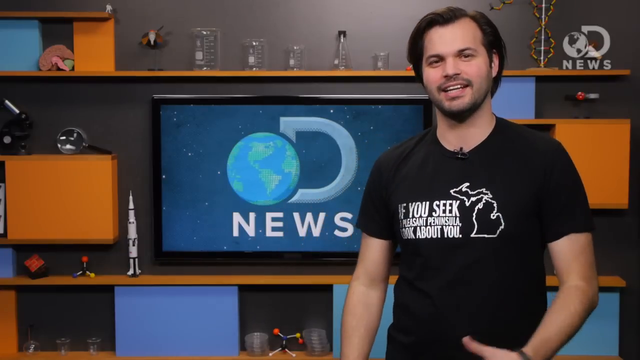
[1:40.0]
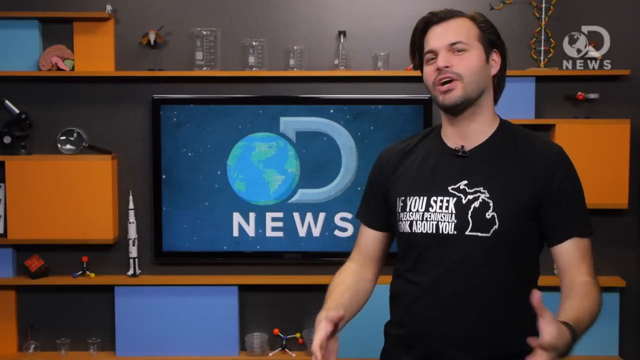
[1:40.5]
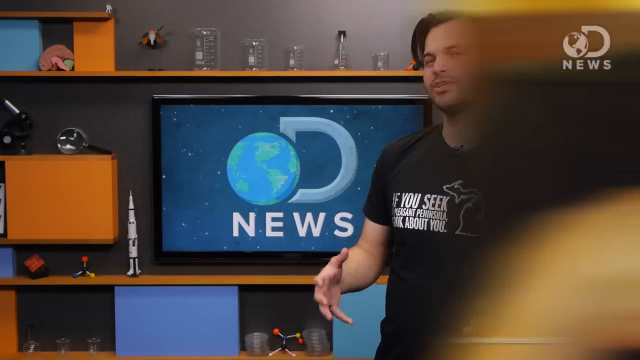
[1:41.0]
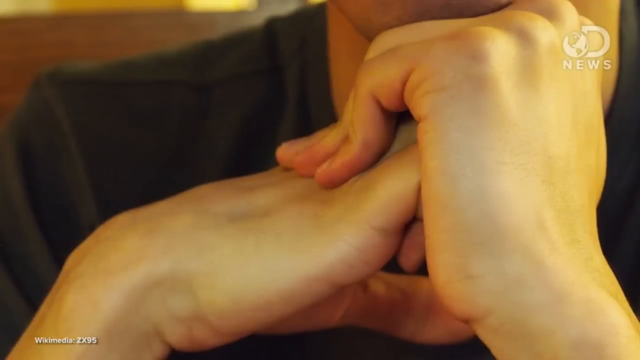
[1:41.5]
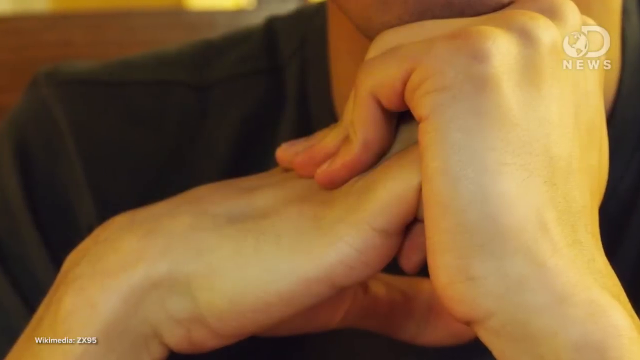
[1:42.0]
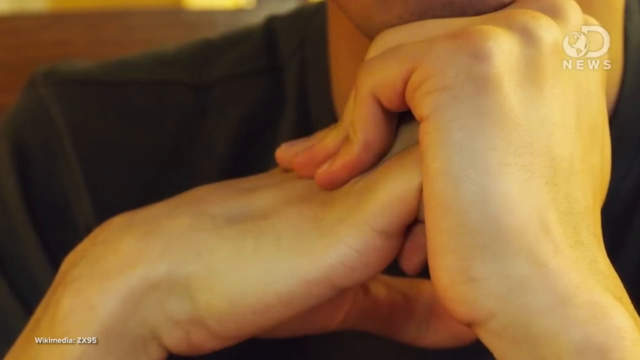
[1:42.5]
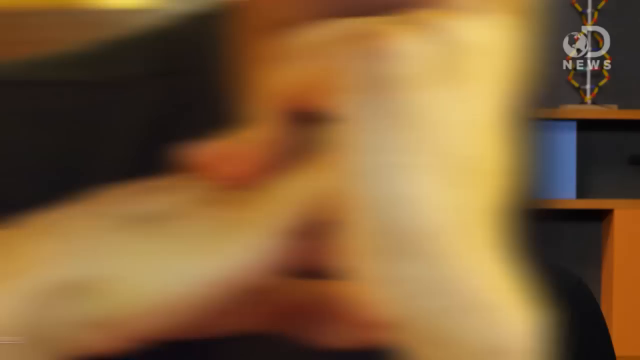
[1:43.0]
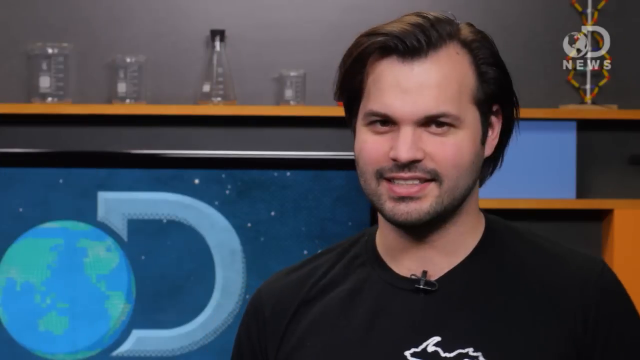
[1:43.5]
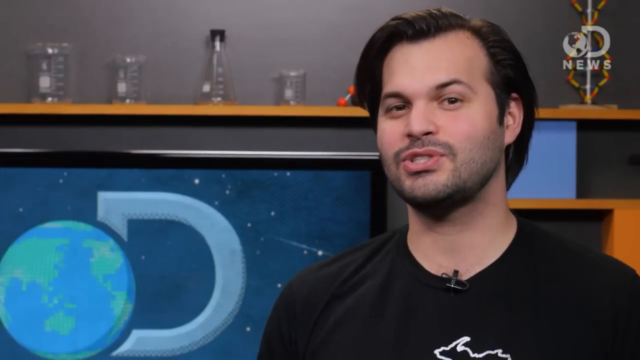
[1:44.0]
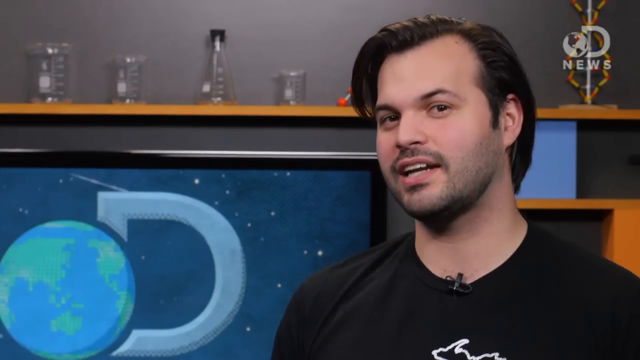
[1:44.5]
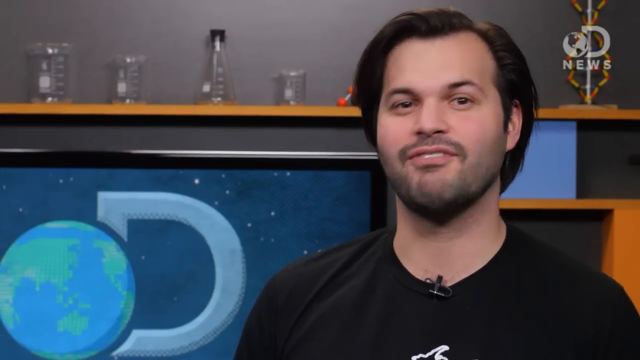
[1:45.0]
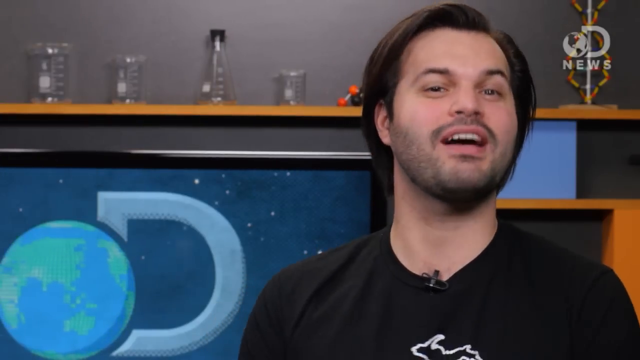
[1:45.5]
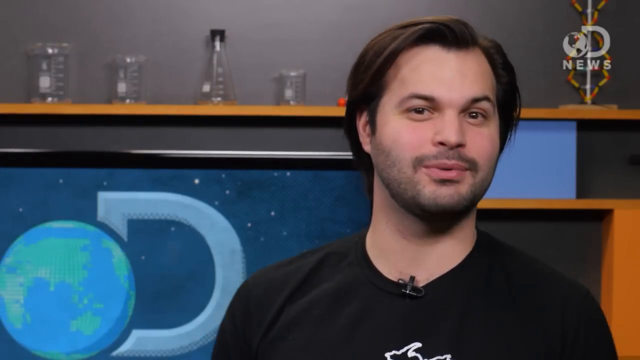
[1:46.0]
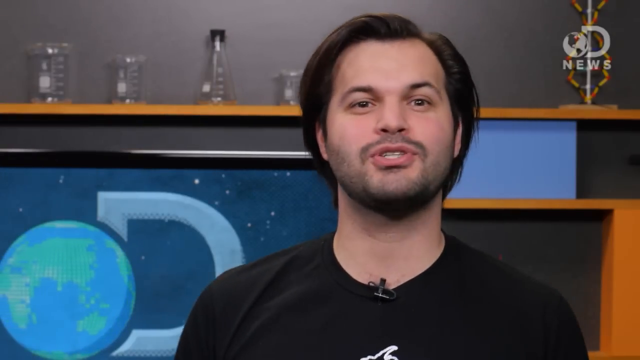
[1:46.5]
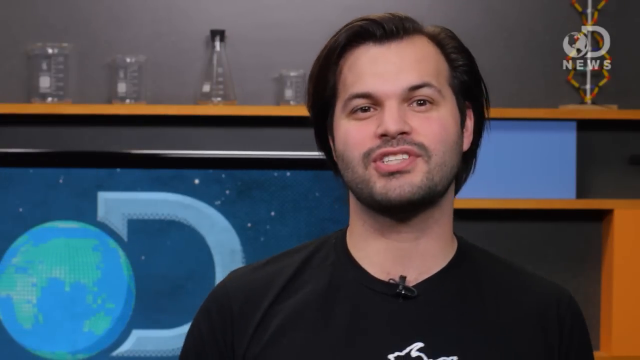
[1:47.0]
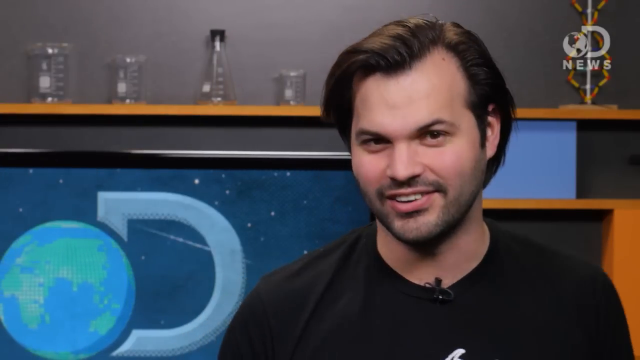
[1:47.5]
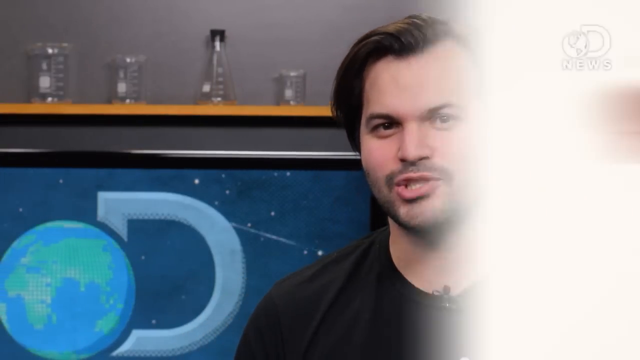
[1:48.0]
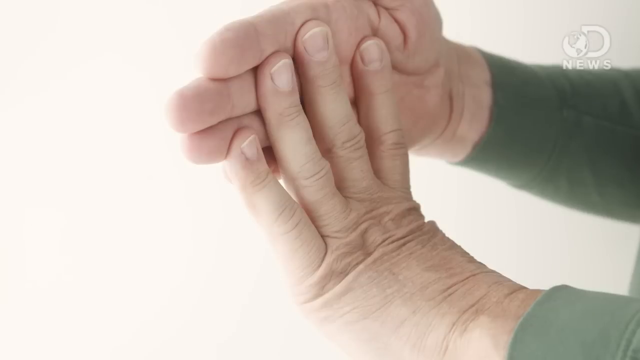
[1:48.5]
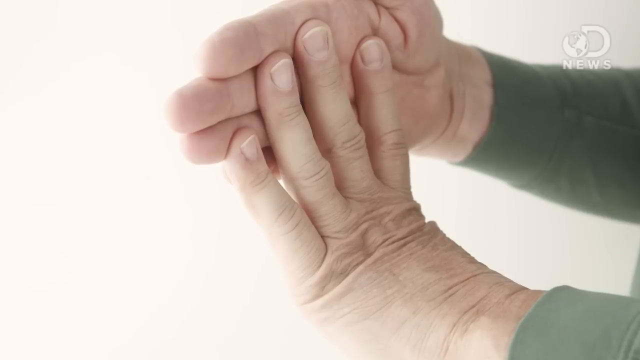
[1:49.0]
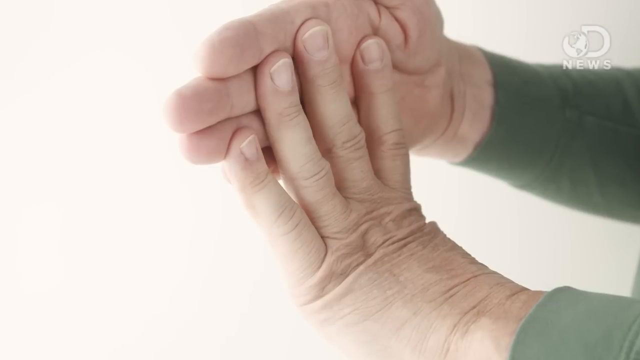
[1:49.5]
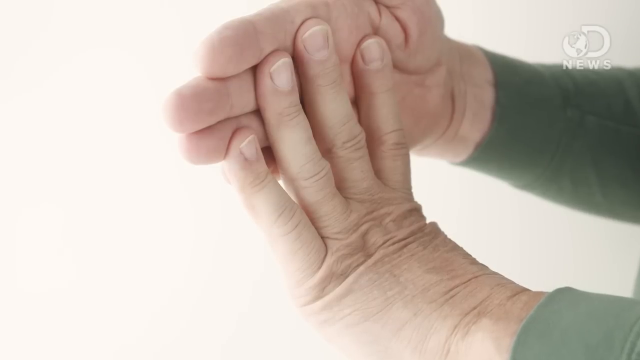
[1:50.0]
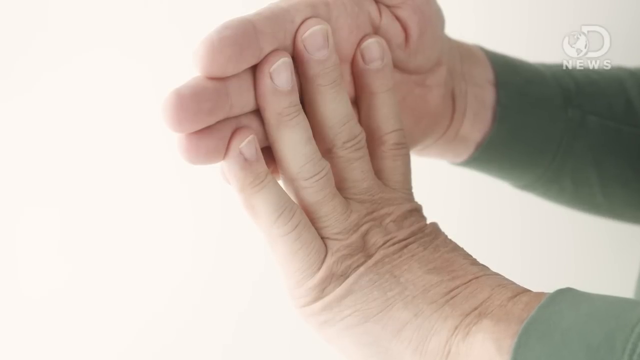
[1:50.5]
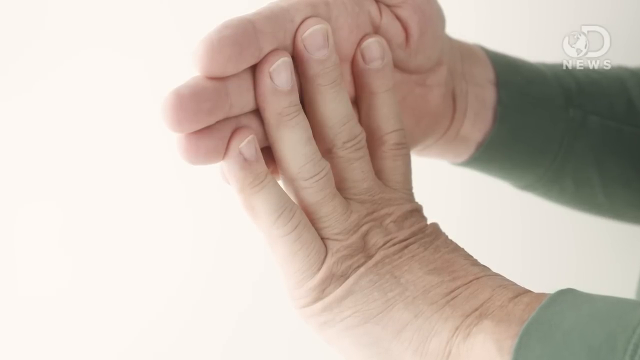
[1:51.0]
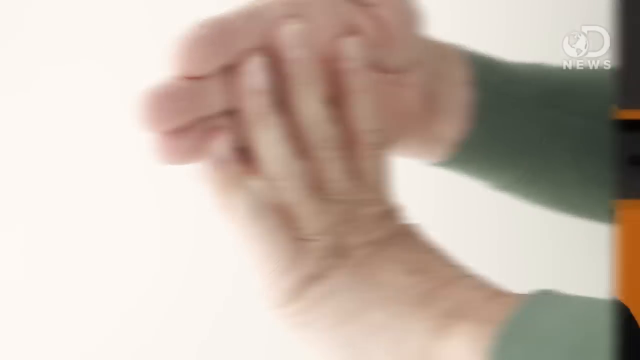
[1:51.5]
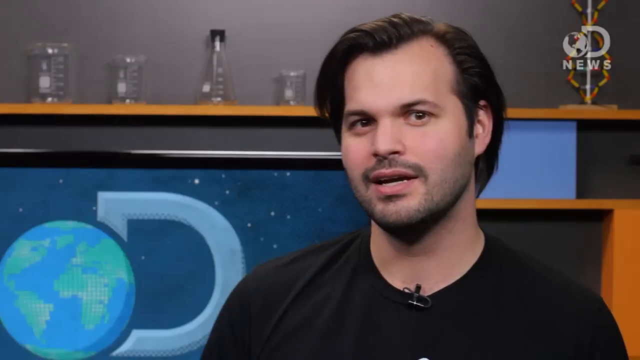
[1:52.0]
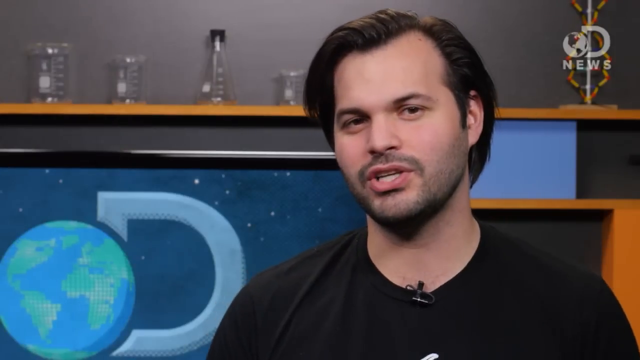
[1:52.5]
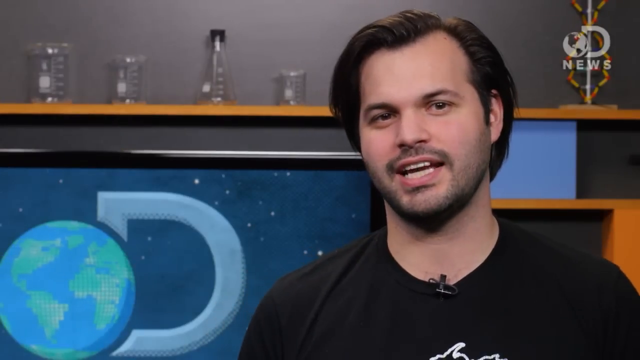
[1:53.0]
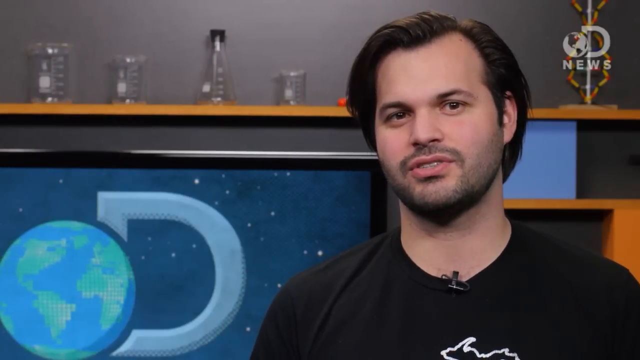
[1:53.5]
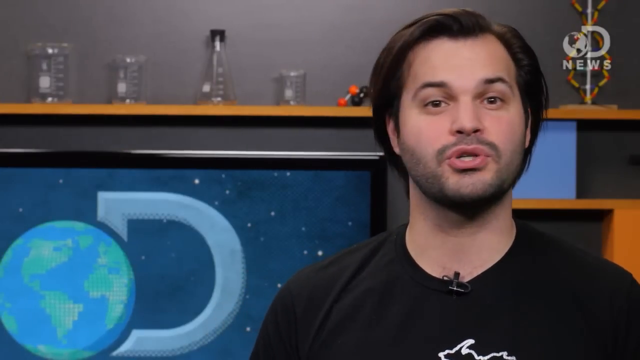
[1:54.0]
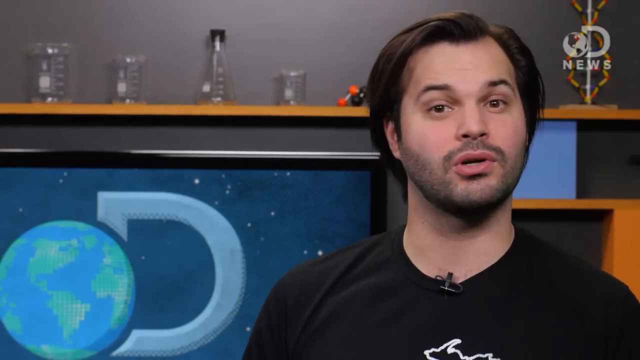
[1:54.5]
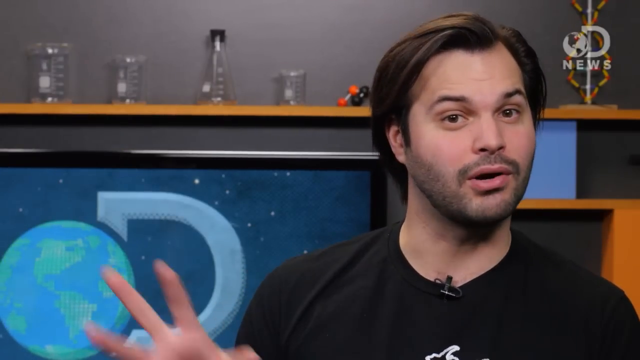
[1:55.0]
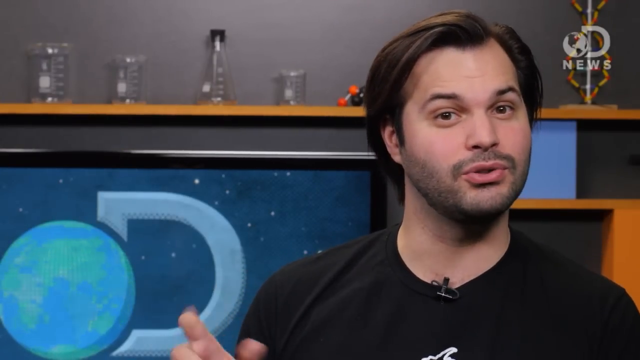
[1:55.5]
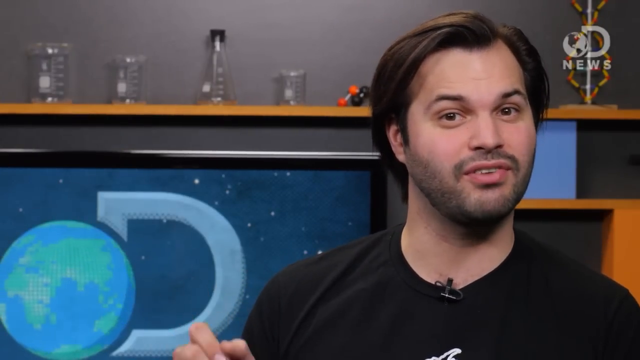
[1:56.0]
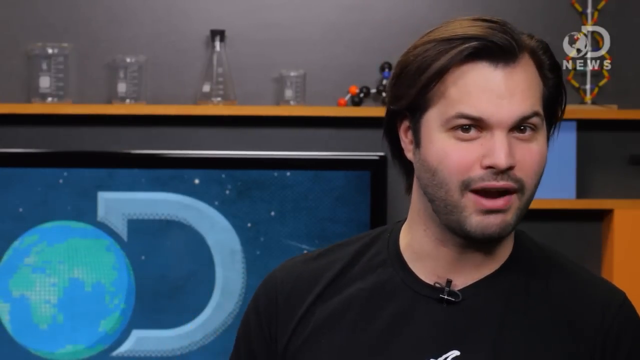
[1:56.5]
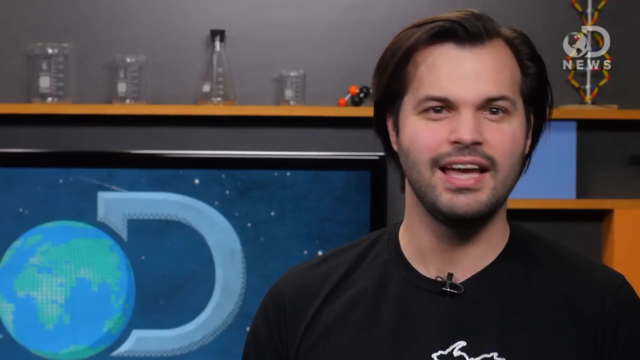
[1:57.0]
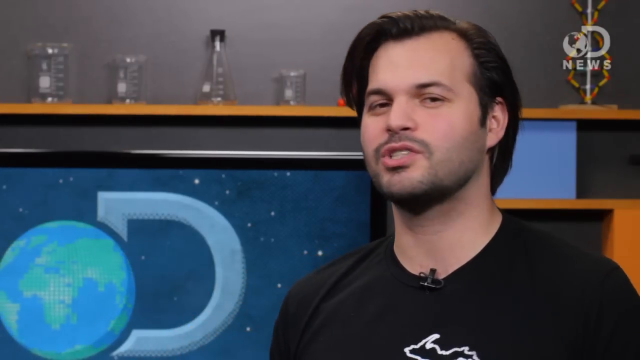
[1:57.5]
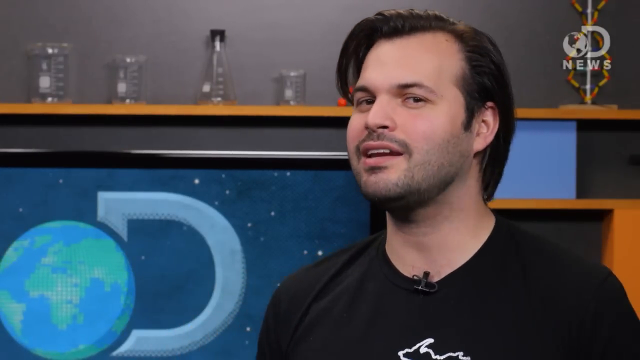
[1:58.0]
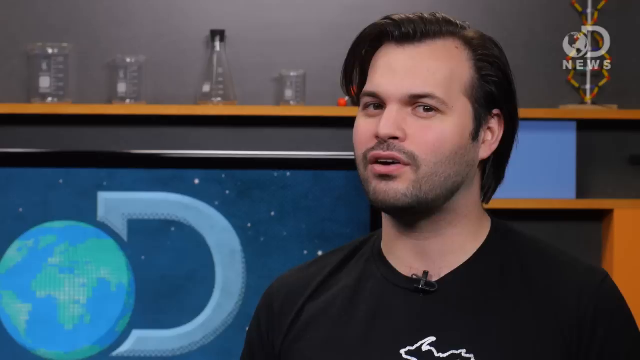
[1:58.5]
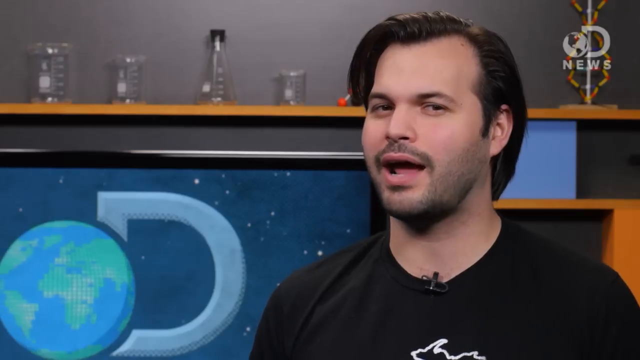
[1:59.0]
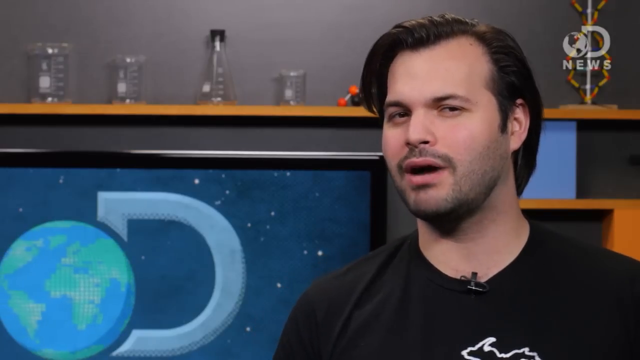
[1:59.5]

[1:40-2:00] The anchor on the DNews channel is a young man, probably in his 20s, named Trace. A young person's hands are shown, with green sleeves on.